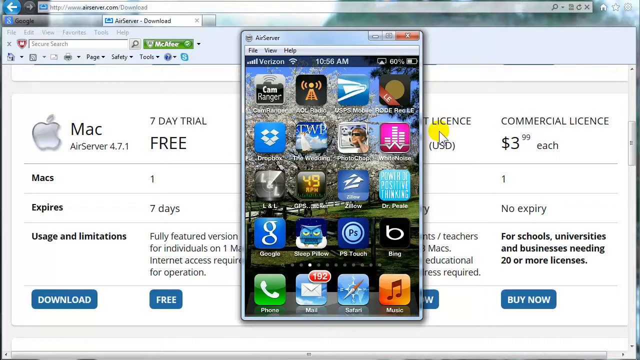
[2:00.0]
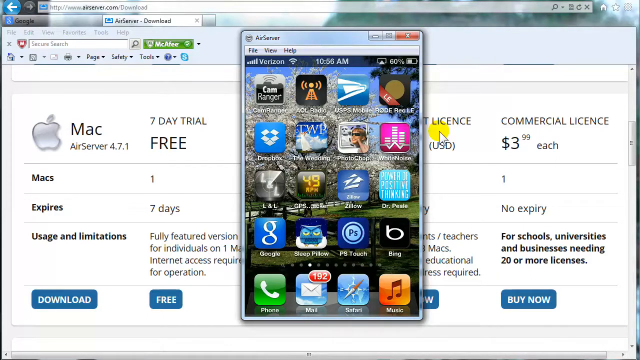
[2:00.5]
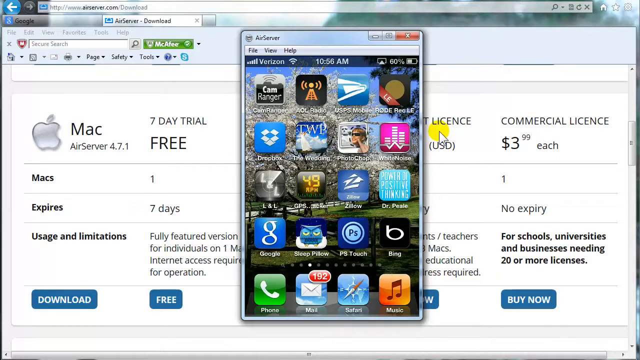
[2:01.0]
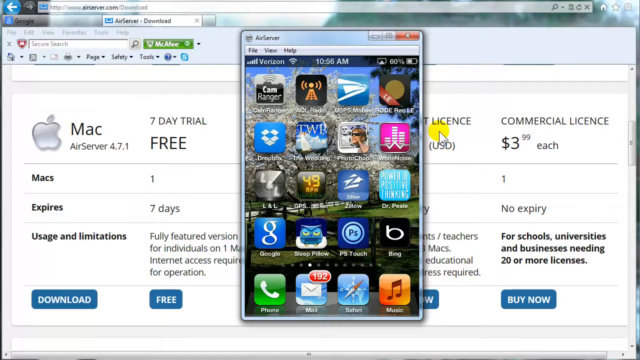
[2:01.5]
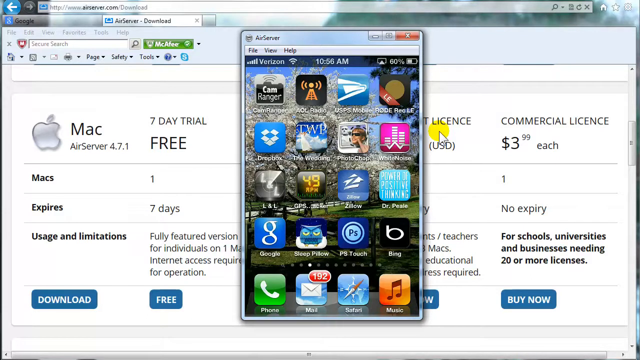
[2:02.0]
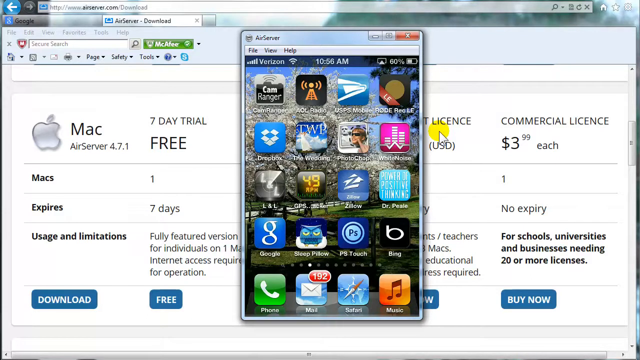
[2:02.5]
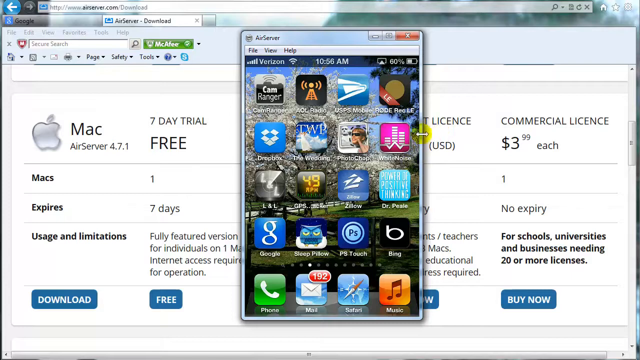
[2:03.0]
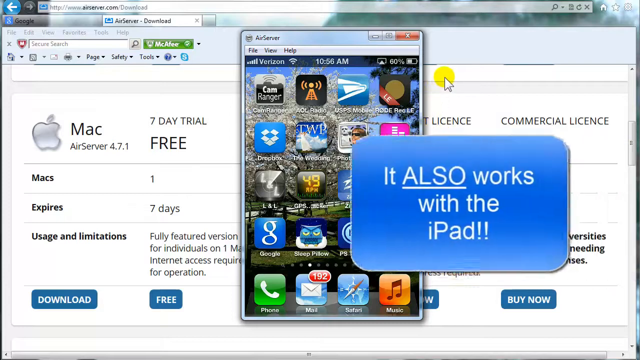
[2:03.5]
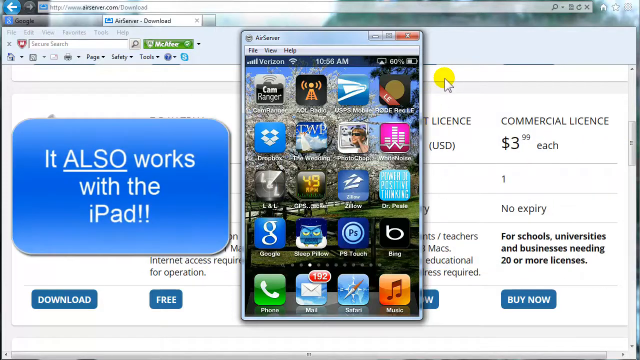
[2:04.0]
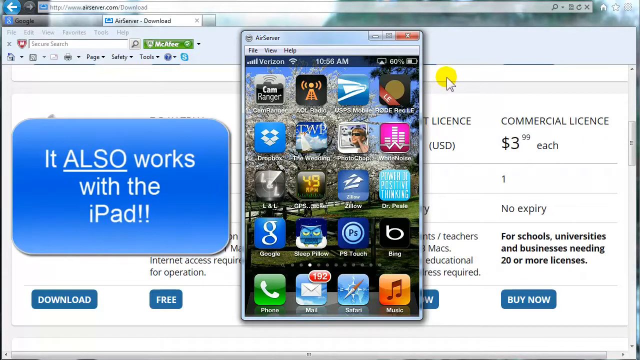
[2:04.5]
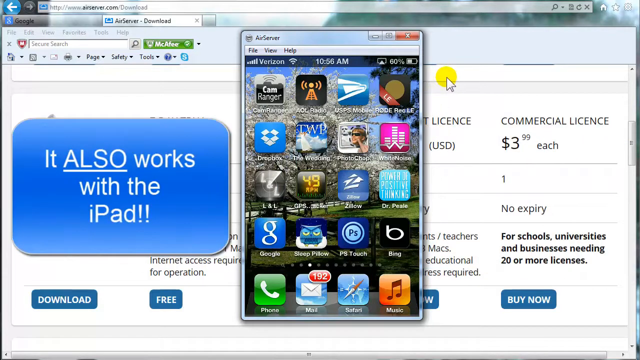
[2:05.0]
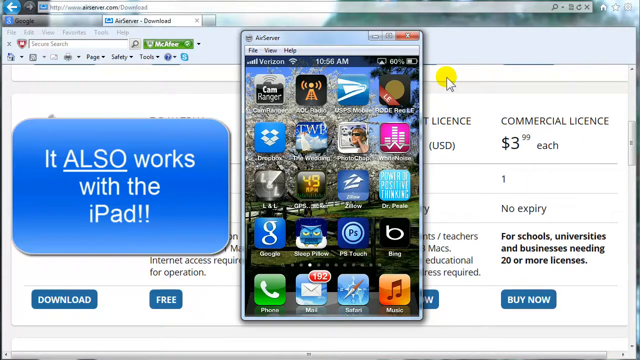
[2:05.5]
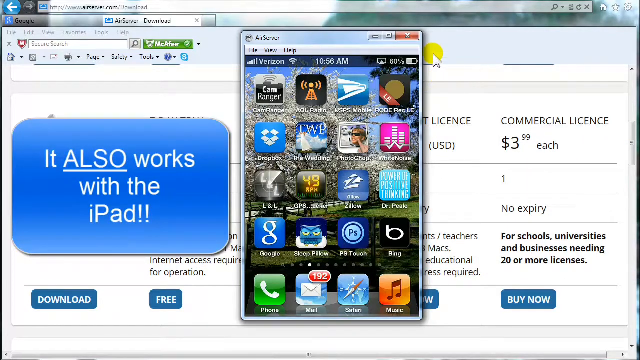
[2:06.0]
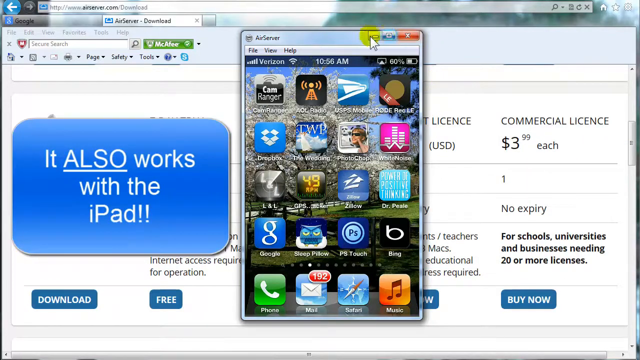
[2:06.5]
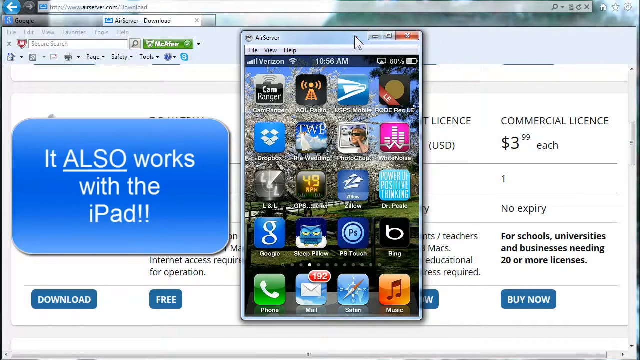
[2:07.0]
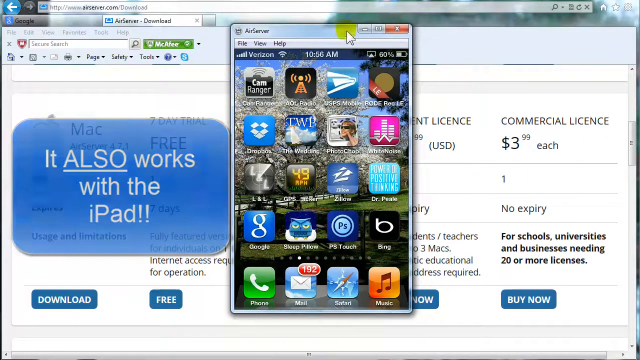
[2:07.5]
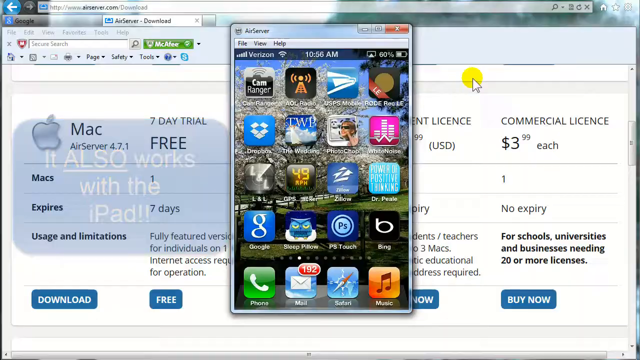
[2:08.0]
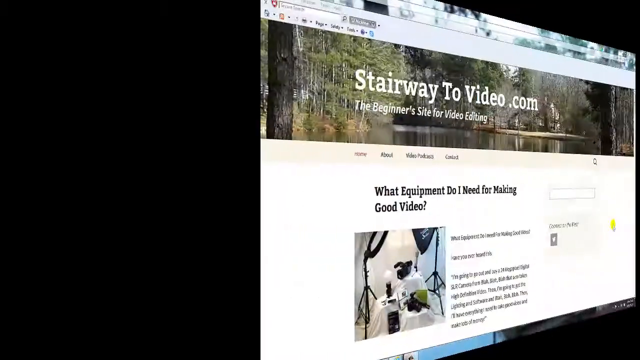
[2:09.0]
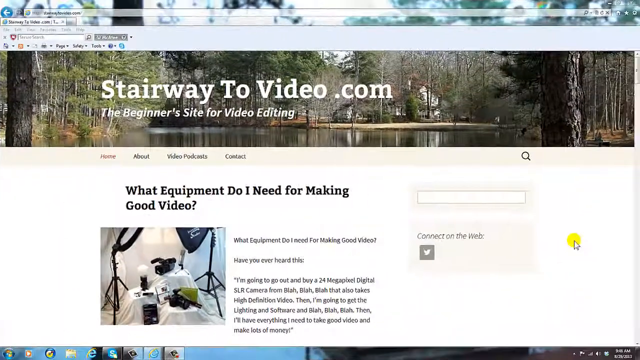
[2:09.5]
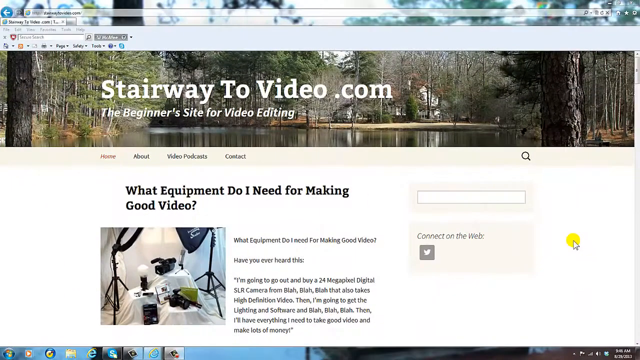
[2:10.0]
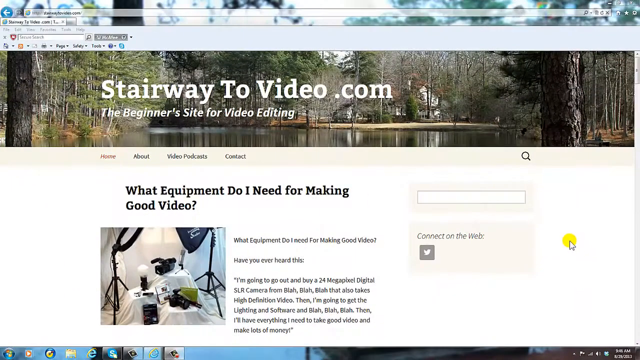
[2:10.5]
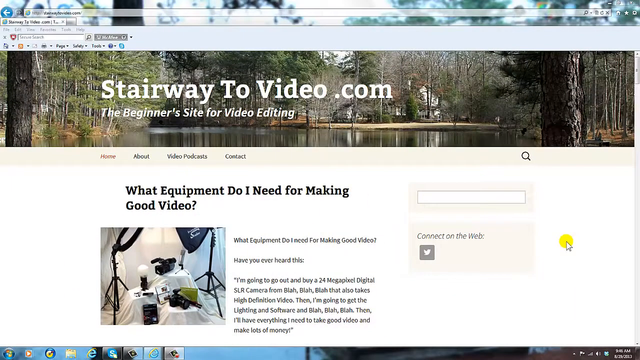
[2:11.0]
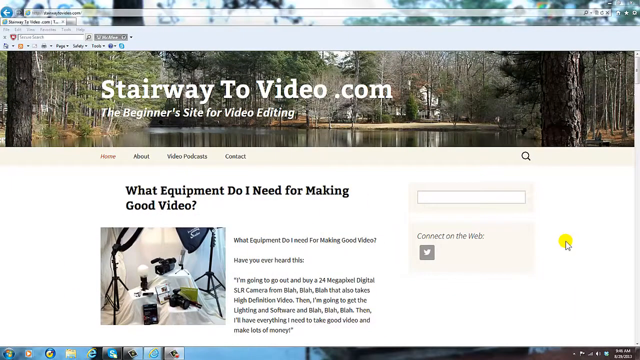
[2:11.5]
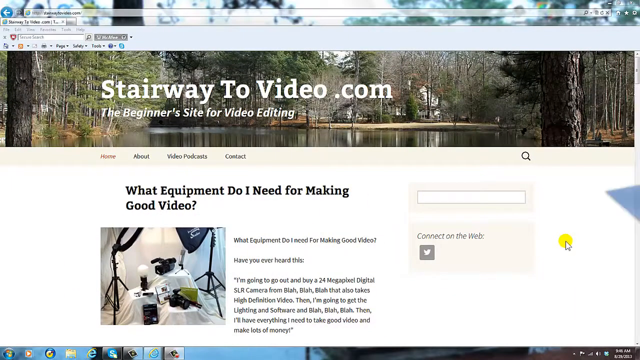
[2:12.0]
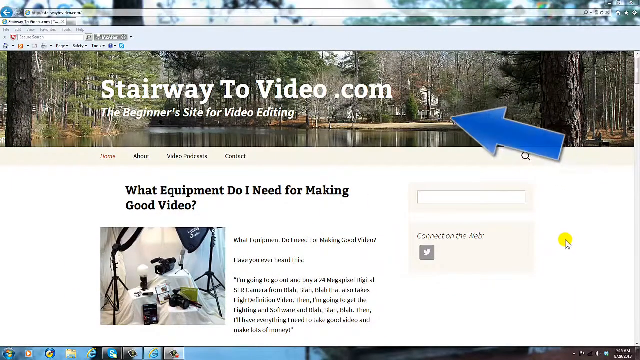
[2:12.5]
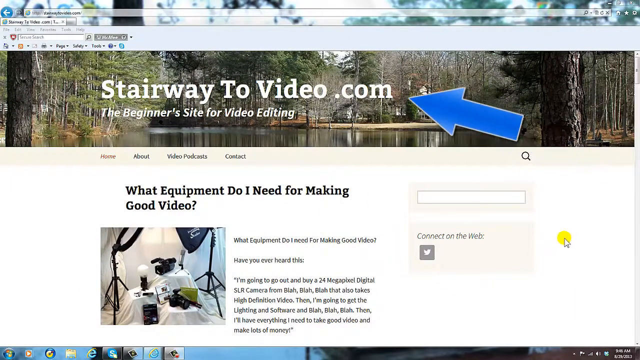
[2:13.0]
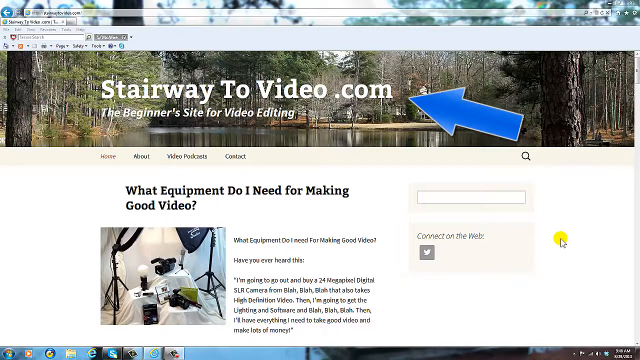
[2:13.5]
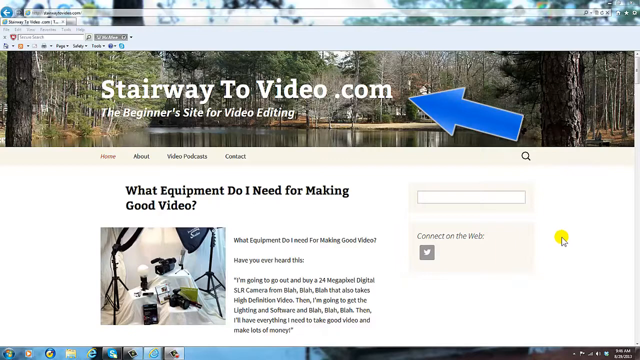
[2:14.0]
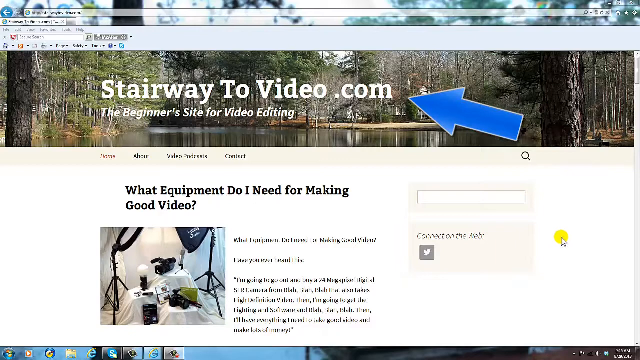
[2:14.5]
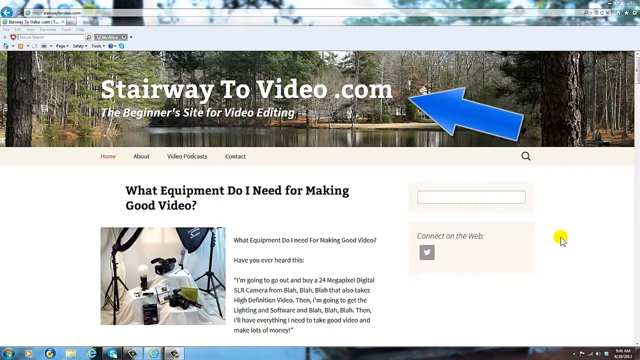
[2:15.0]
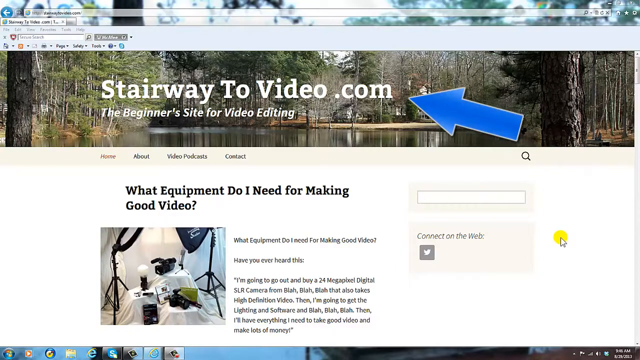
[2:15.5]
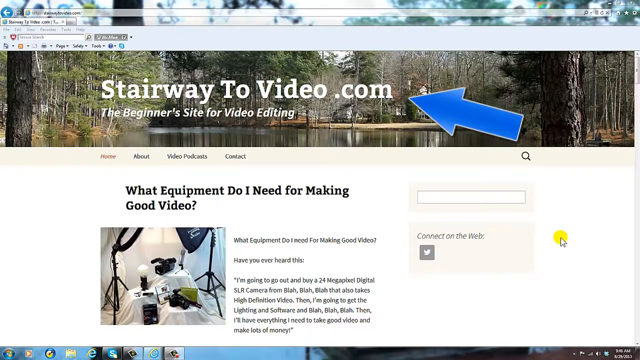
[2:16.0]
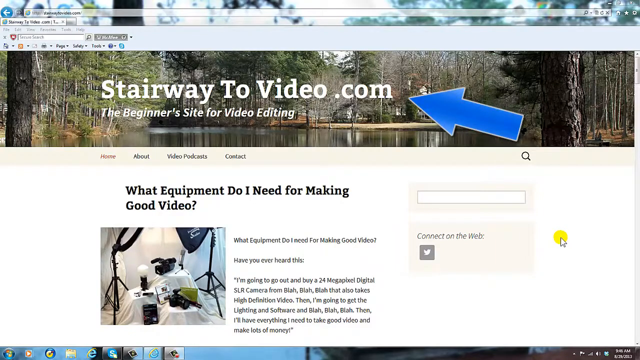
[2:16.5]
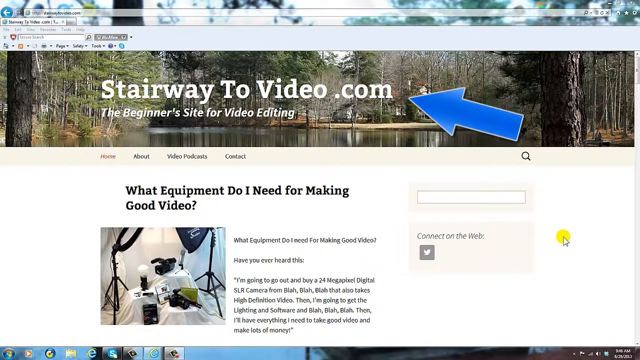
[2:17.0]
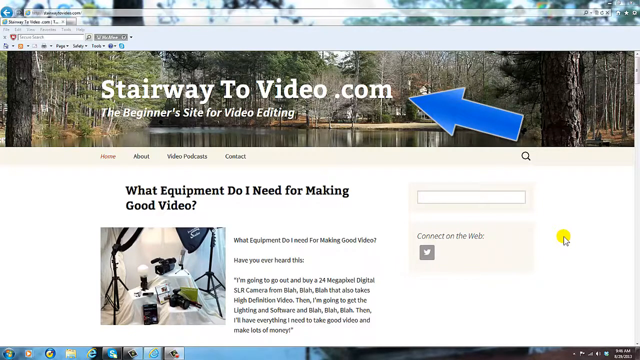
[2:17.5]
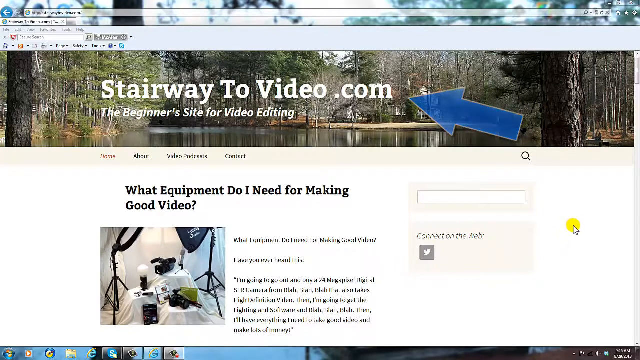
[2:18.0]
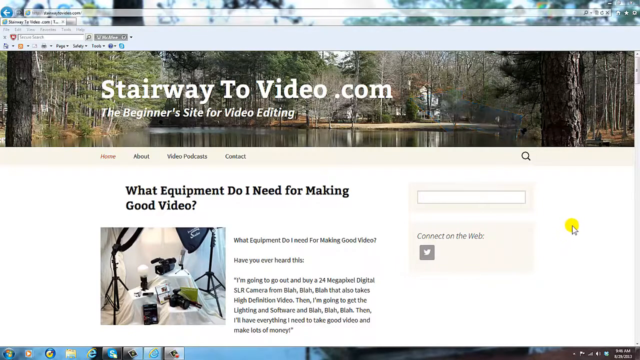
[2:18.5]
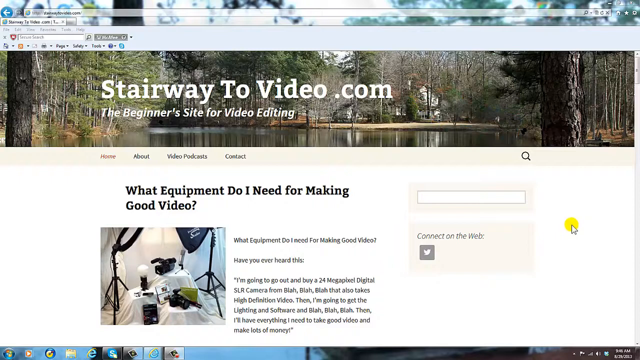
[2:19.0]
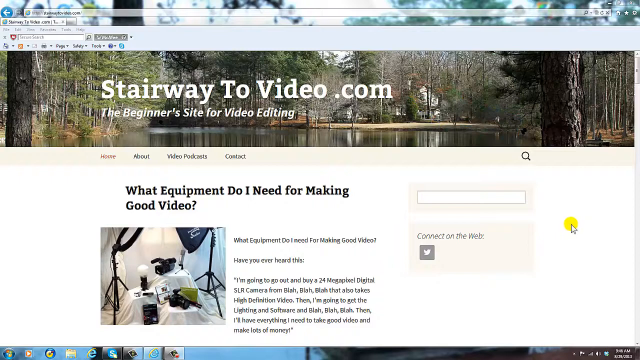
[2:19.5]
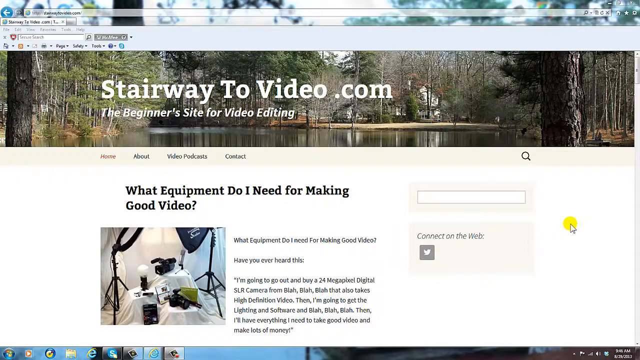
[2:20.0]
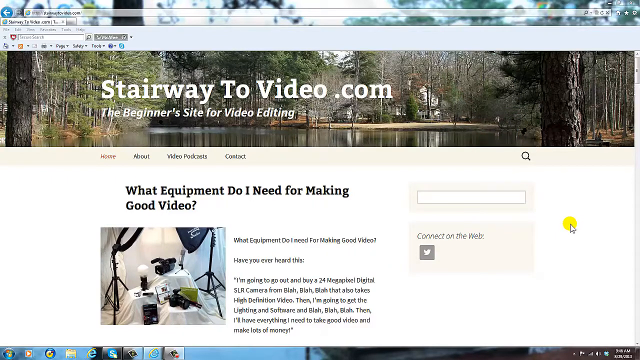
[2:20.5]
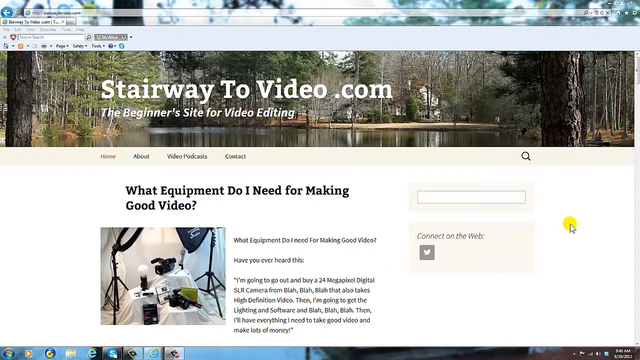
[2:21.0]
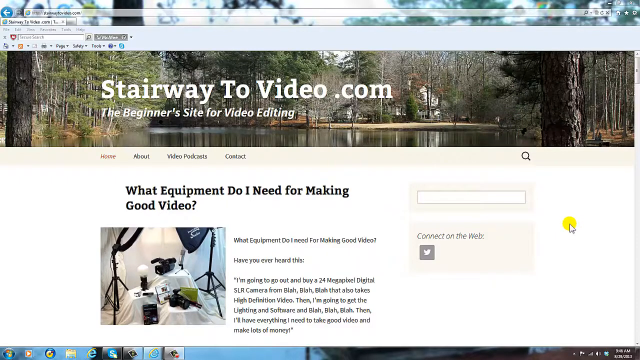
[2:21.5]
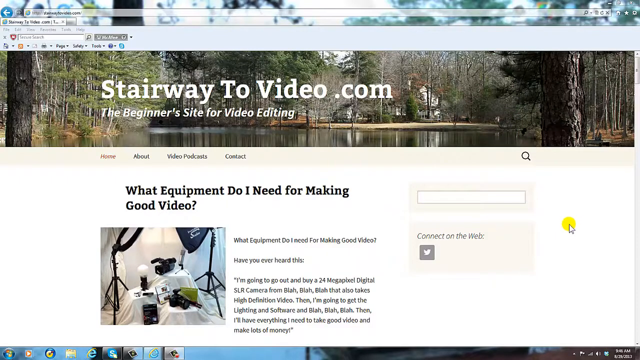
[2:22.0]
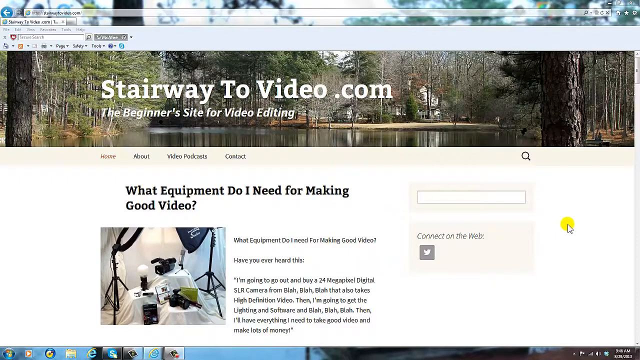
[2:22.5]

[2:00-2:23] A computer screen shows a website, and in the foreground a window shaped like a cell phone is open, with many icons inside a screen that kind of looks like a cell phone screen. A blue box flies from the right side of the screen all the way to the left with white text that says "it also works with the iPad" followed by two exclamation points. A cursor moves around the window in the foreground, and the window seems to be grabbed and repositioned right in the middle of the screen. The video then cuts to another website that says "stairway to video.com," with an article underneath that says "what equipment do I need for making good video?"